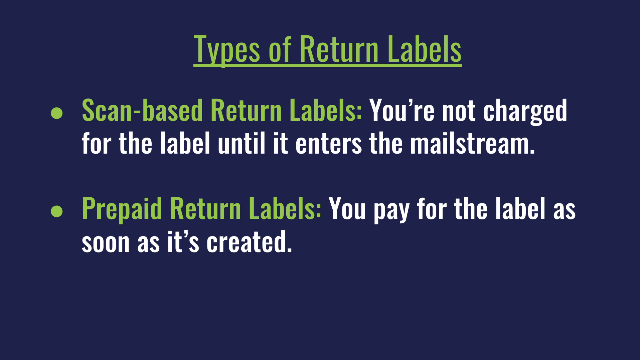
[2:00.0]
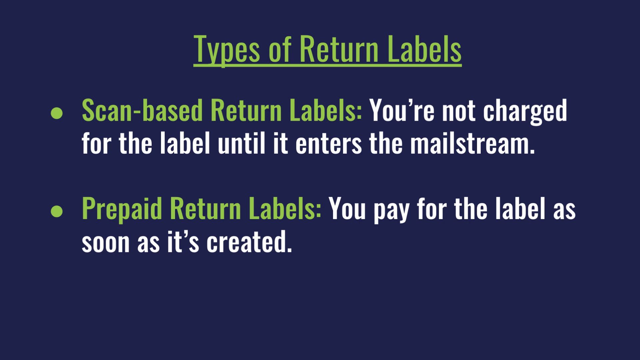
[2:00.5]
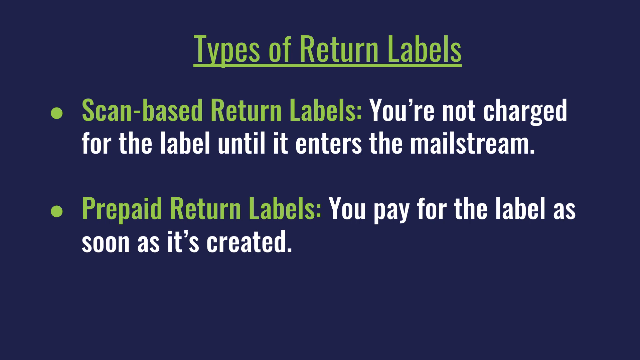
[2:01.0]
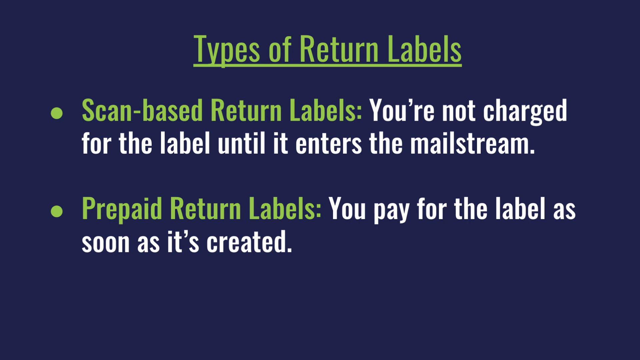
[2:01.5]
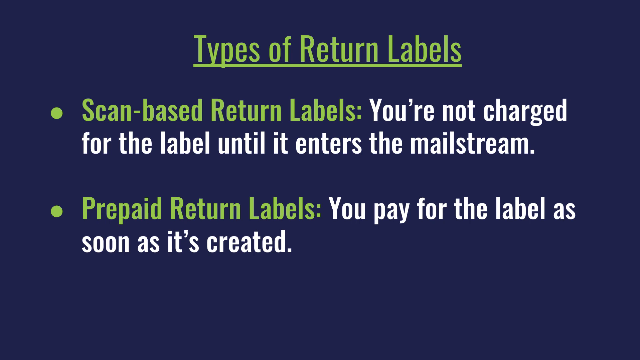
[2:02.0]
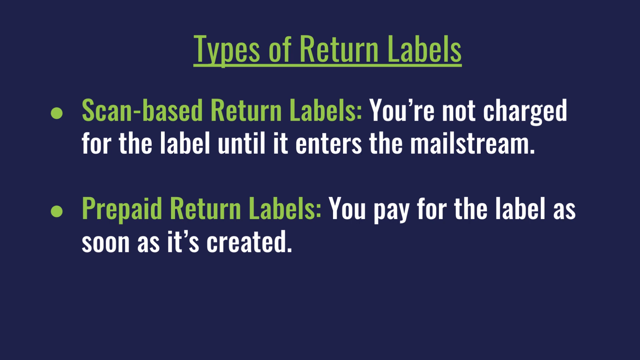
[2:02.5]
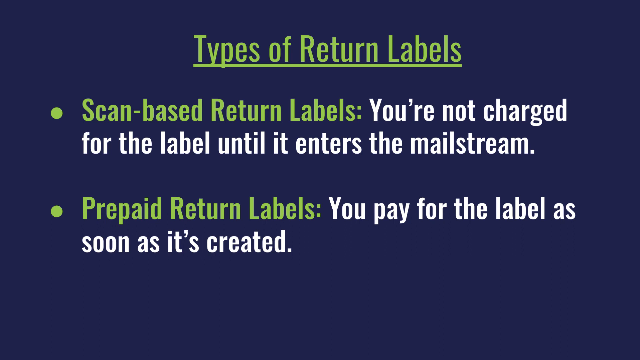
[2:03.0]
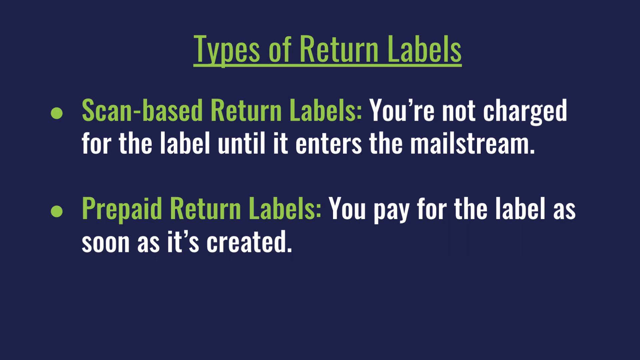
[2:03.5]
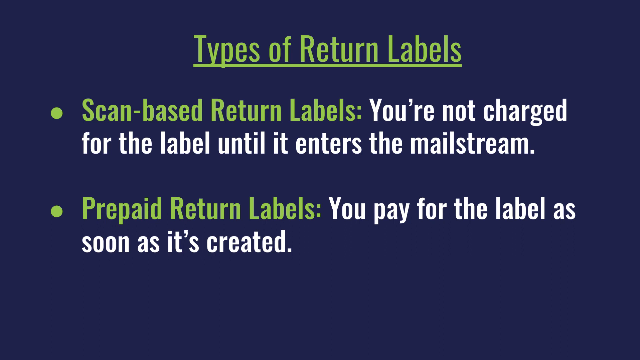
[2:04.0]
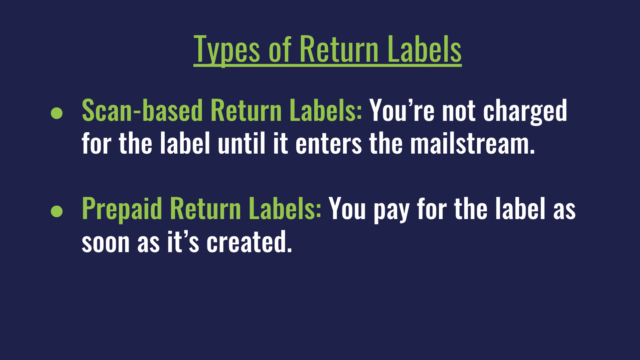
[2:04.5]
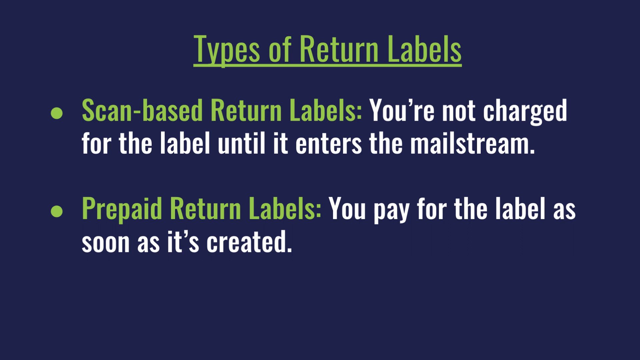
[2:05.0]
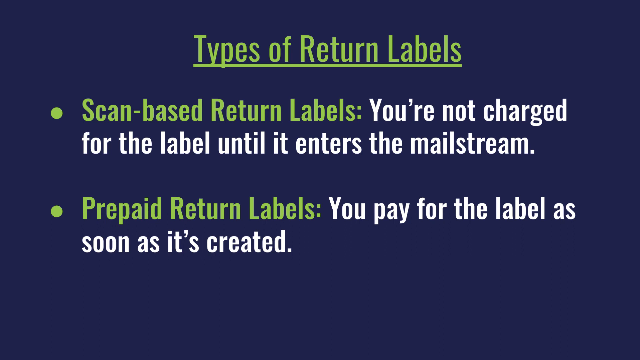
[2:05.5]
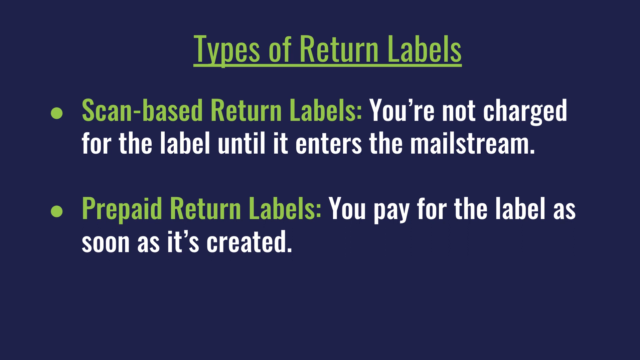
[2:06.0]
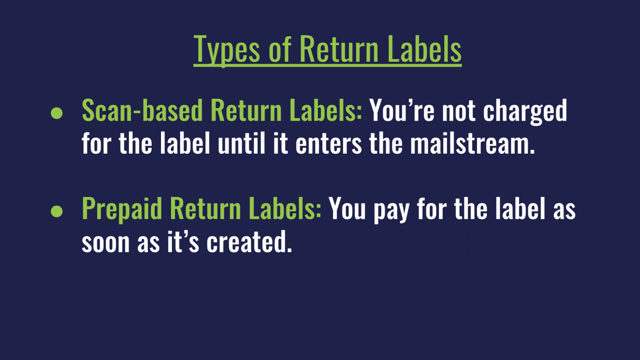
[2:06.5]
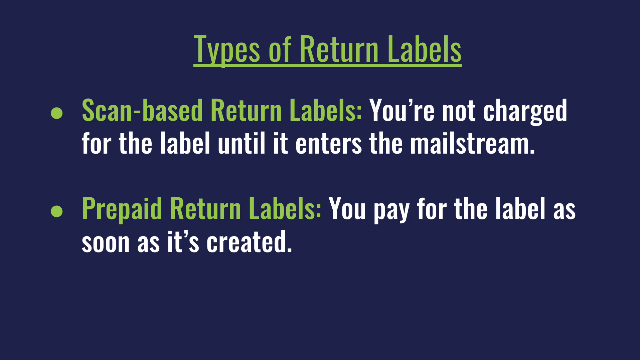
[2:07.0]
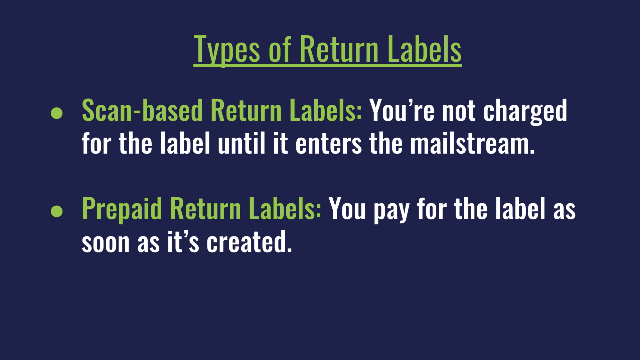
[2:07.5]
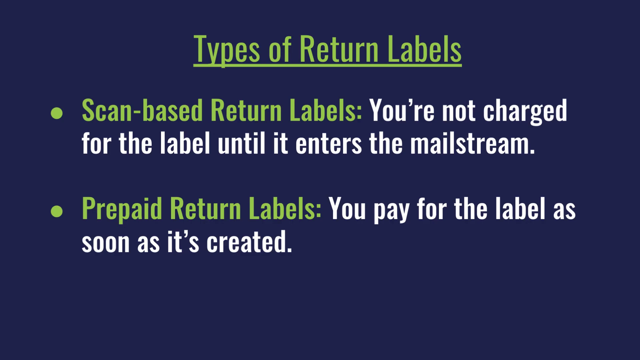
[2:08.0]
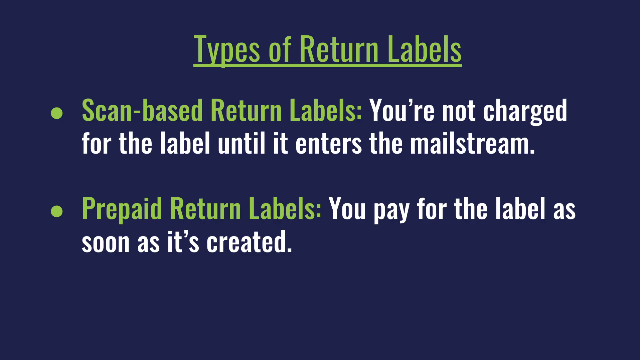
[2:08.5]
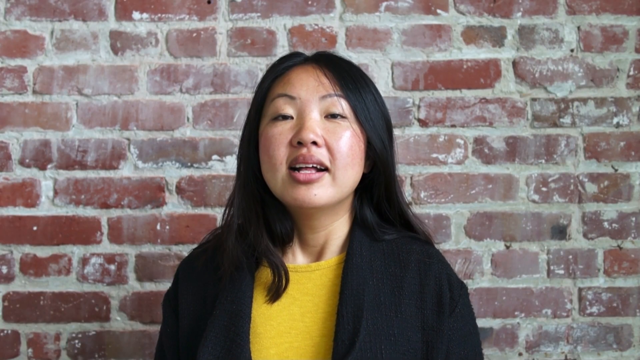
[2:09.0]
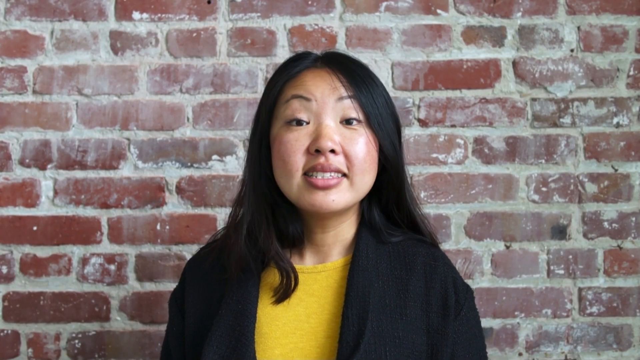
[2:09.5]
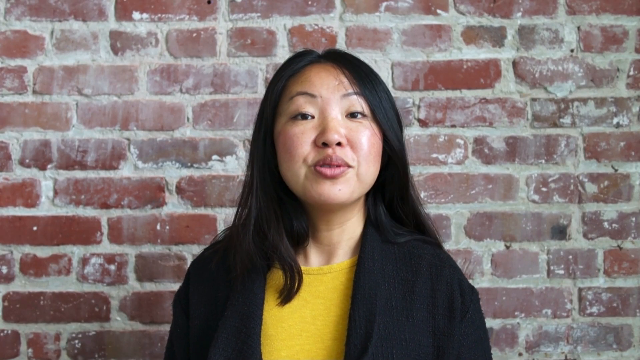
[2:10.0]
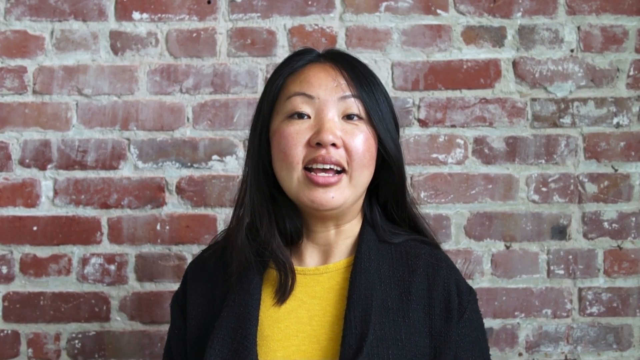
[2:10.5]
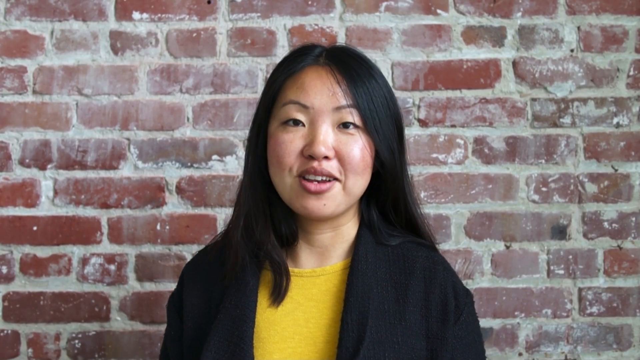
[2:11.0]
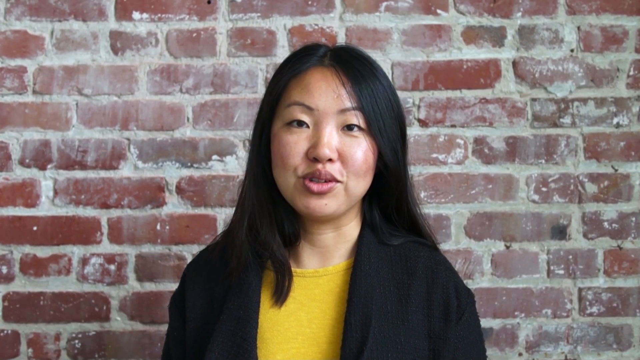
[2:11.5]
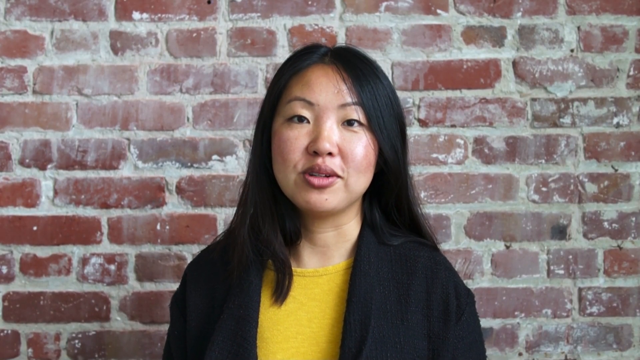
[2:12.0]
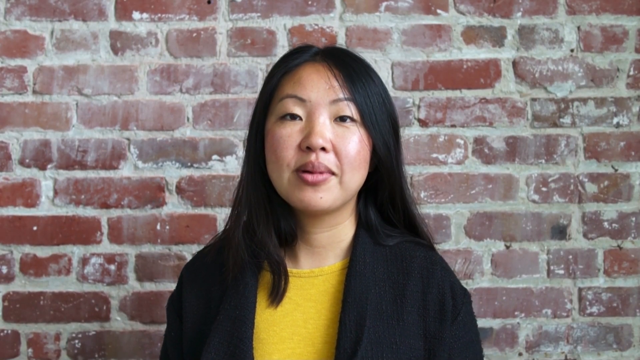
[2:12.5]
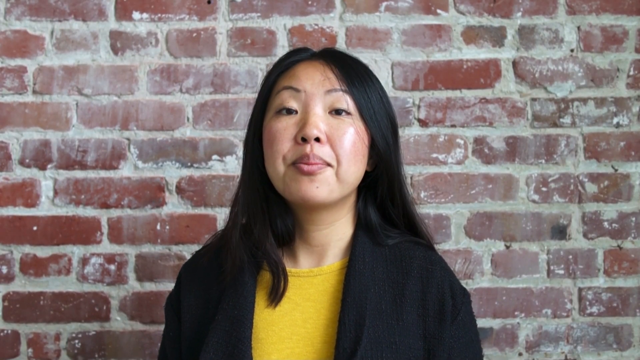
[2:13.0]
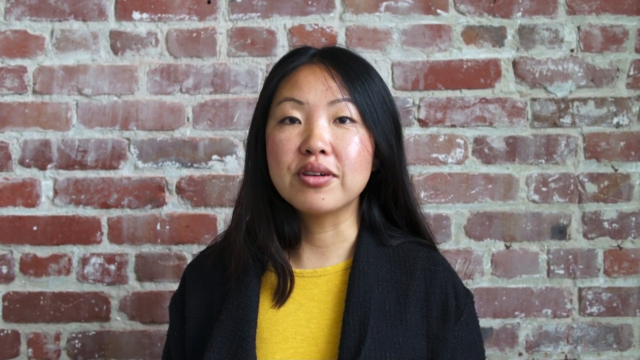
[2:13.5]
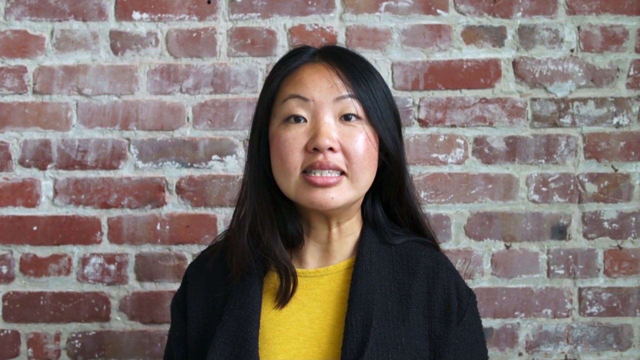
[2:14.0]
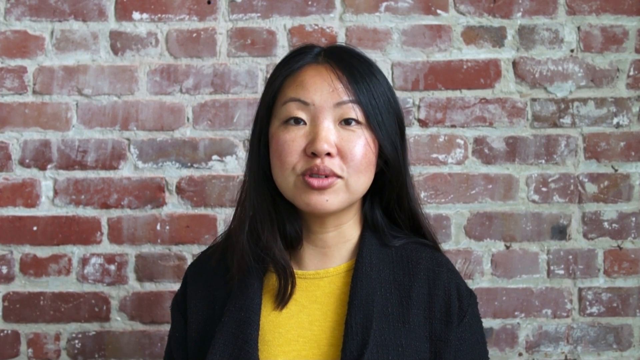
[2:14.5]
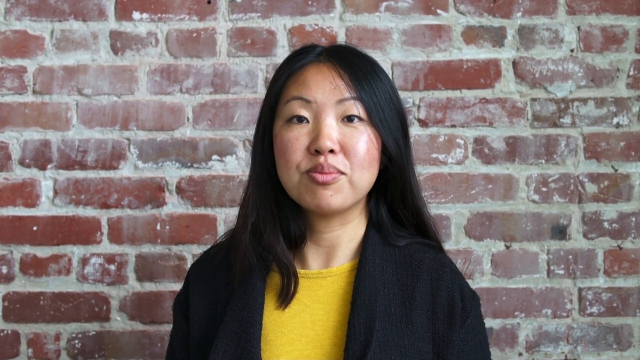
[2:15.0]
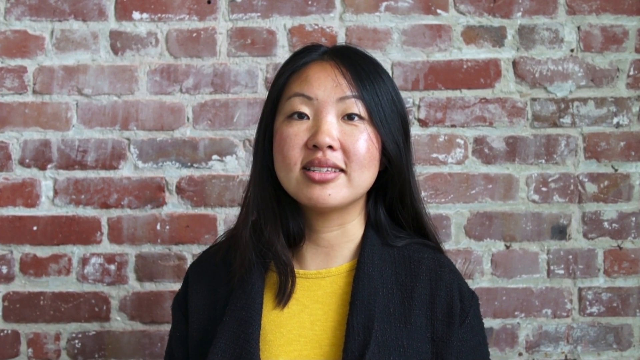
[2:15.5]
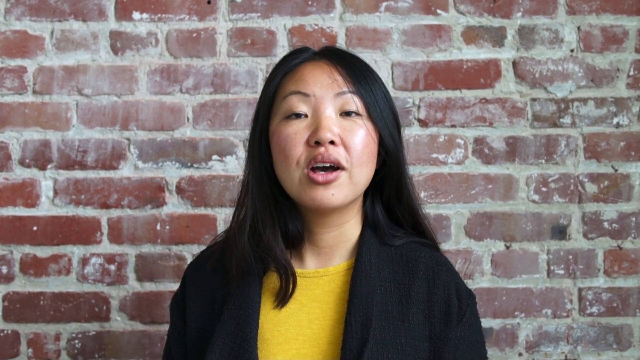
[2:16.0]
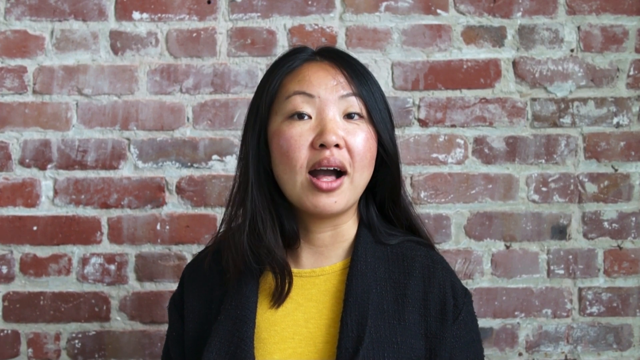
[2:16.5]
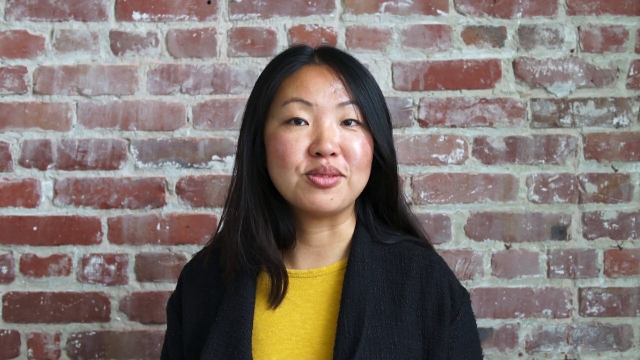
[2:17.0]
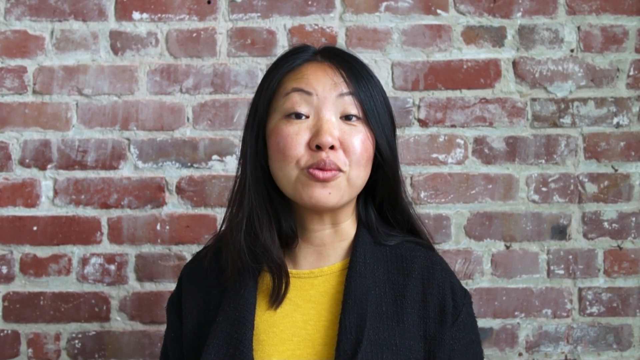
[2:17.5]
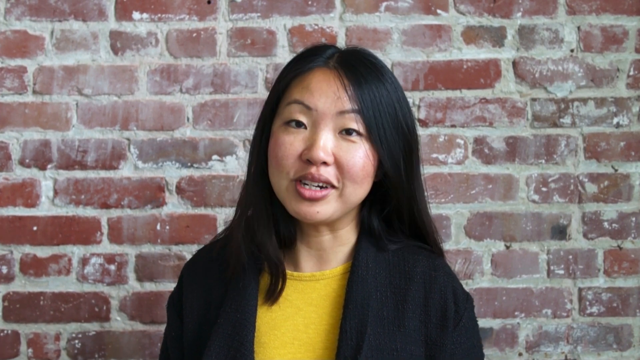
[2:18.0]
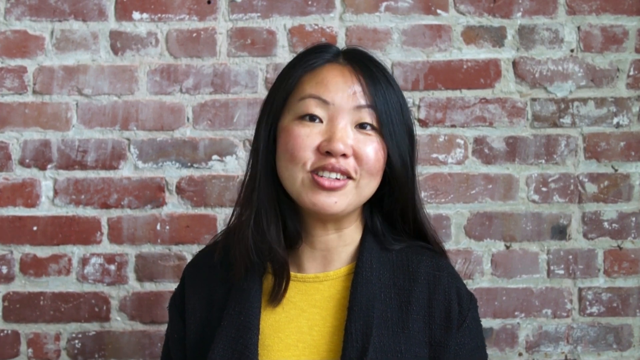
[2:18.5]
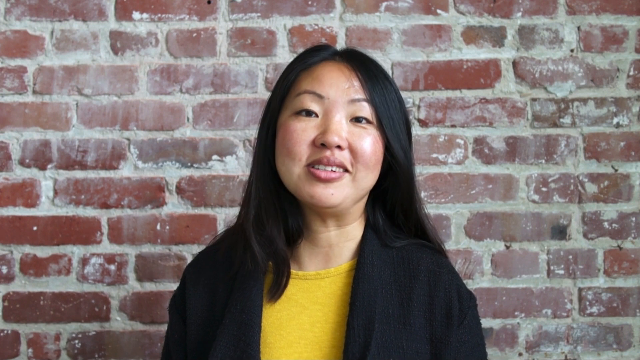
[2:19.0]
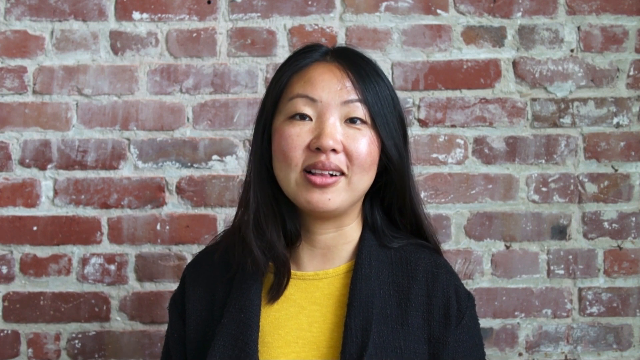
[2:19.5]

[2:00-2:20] The page lists types of return labels in green. The first, in green, is "scan-based return labels," followed by the description in white, "you're not charged for the label until it enters the mail stream." Another bullet point below it, also in green, reads "prepaid return labels," followed by the description in white, "you pay for the label as soon as it is created." The view zooms into these instructions.